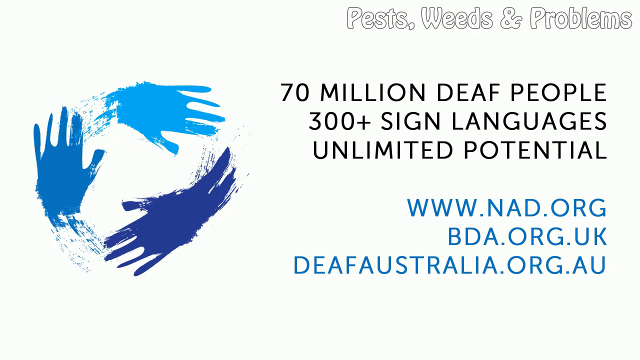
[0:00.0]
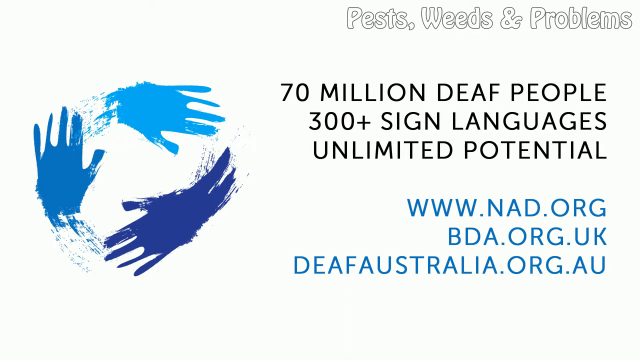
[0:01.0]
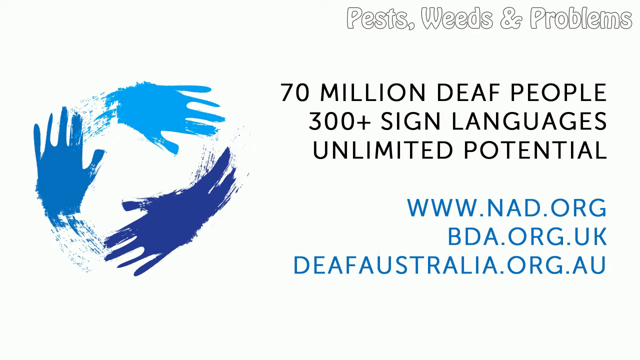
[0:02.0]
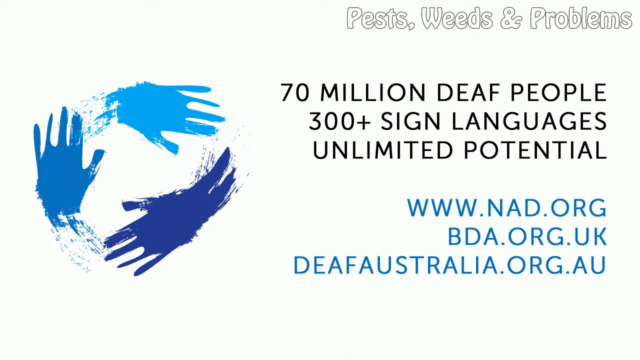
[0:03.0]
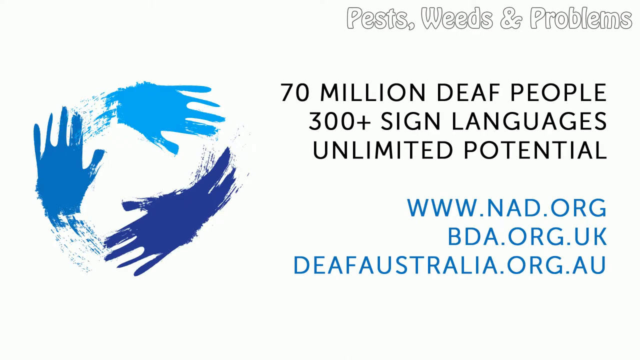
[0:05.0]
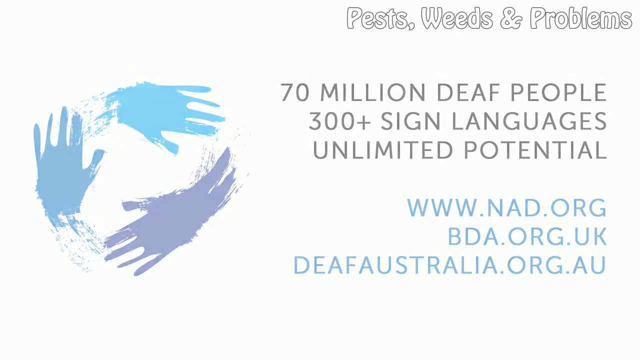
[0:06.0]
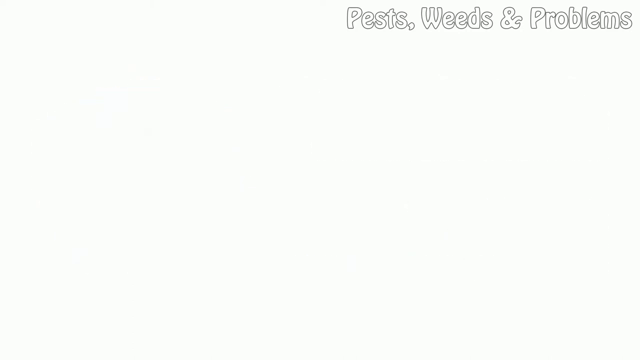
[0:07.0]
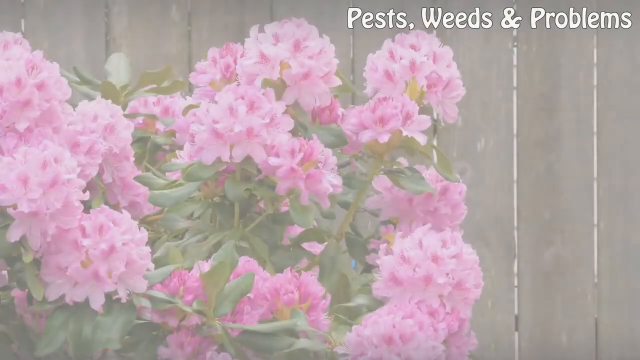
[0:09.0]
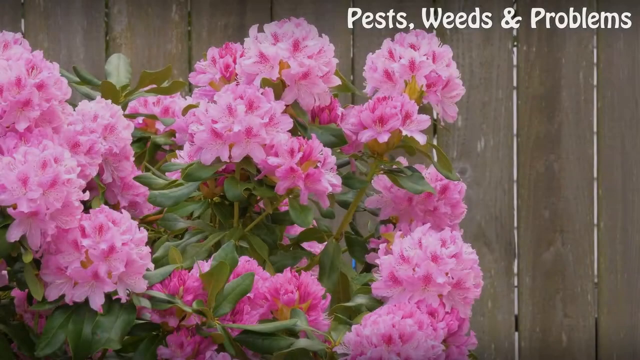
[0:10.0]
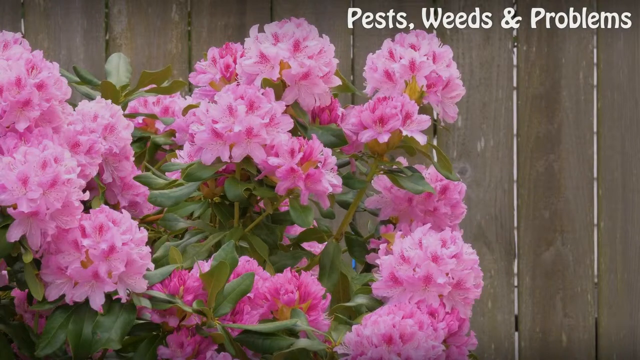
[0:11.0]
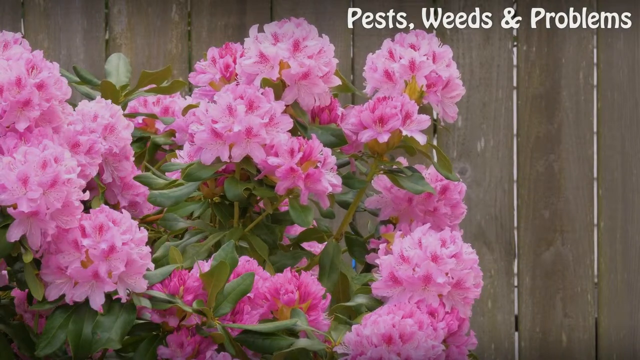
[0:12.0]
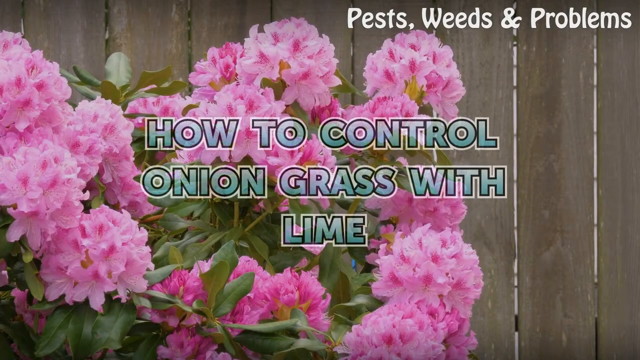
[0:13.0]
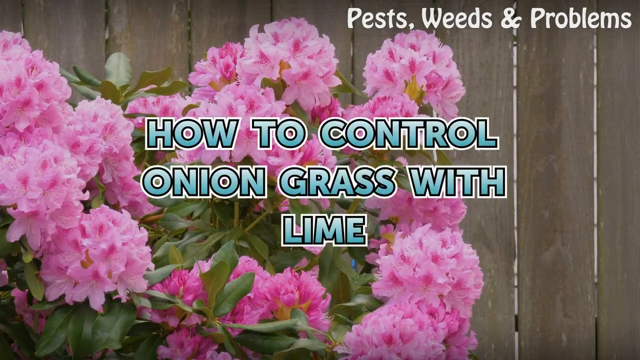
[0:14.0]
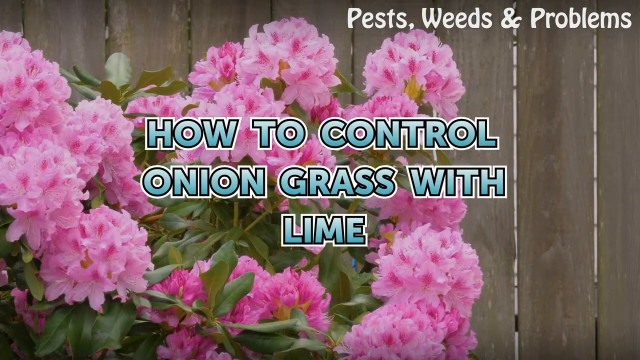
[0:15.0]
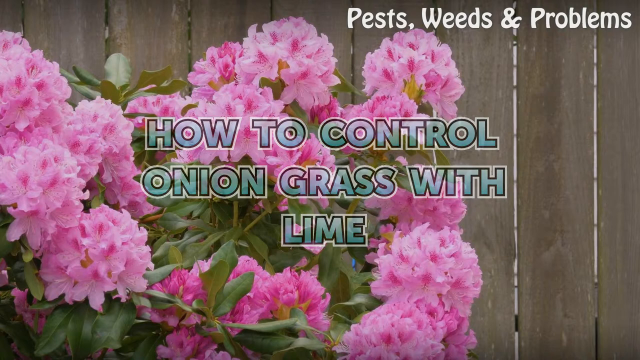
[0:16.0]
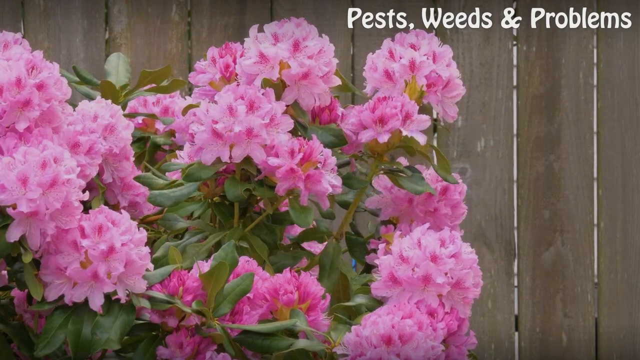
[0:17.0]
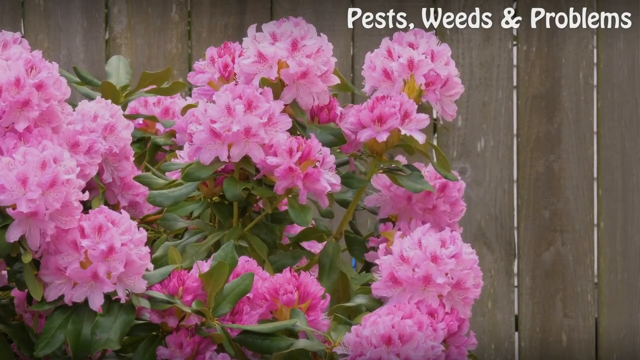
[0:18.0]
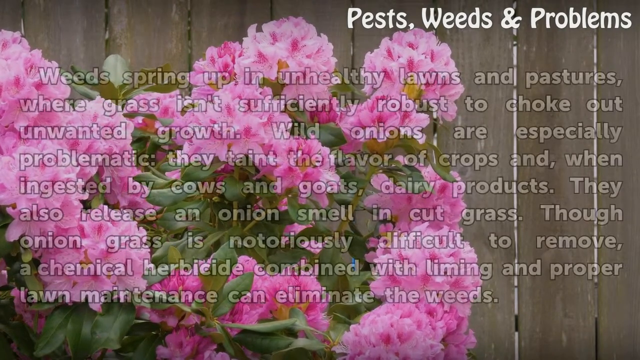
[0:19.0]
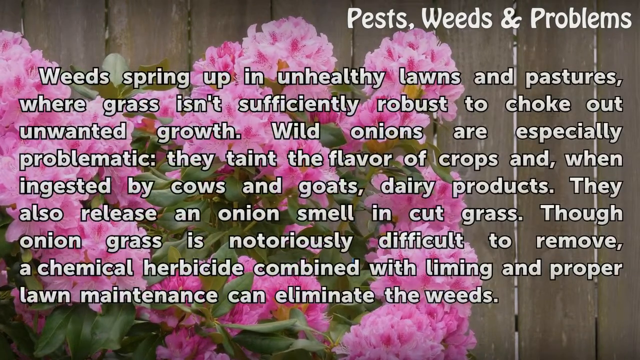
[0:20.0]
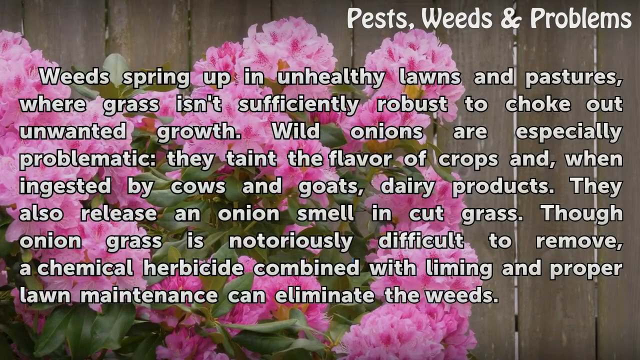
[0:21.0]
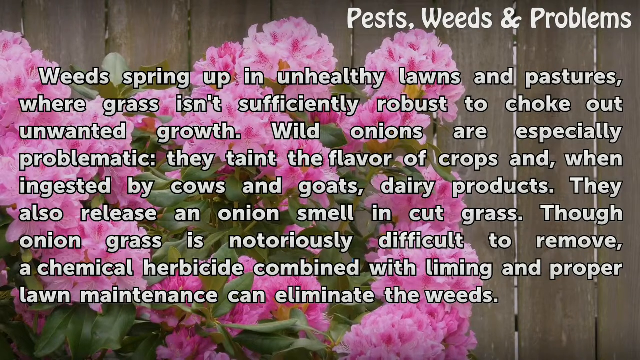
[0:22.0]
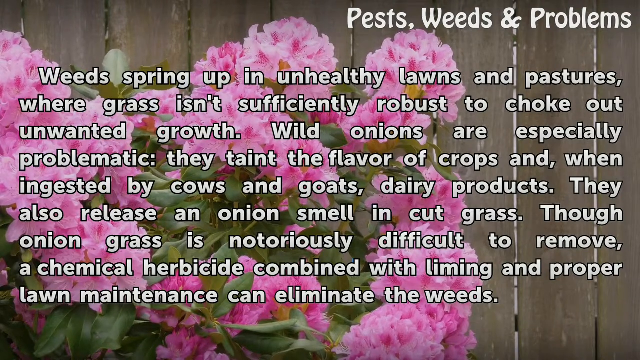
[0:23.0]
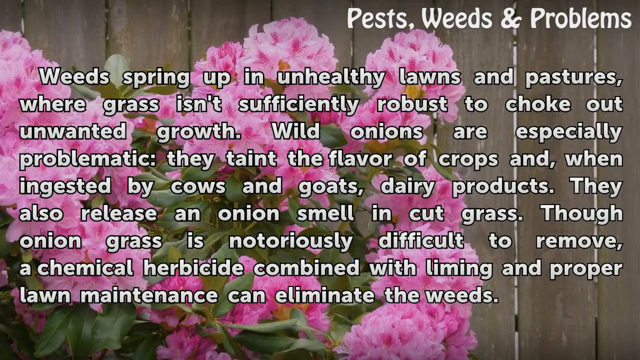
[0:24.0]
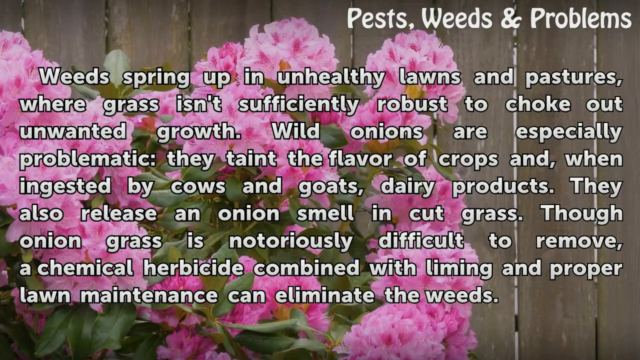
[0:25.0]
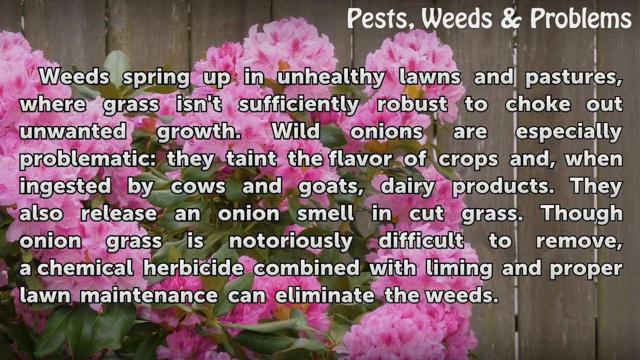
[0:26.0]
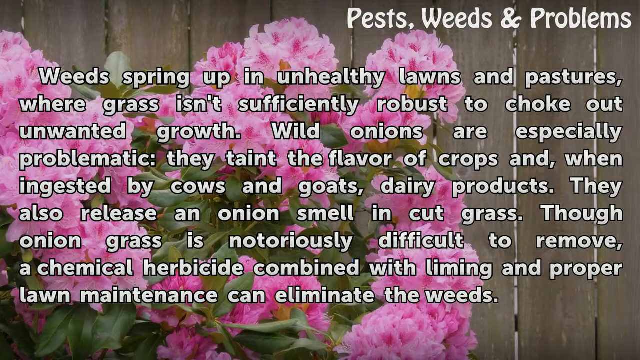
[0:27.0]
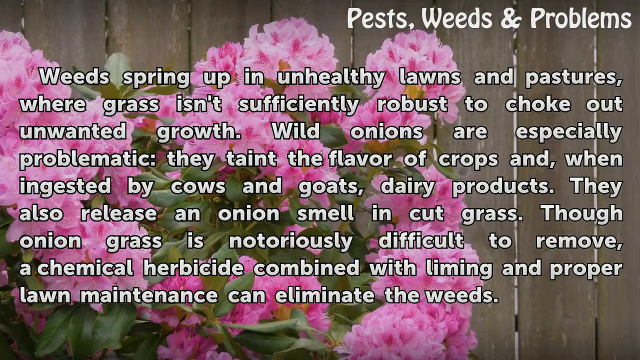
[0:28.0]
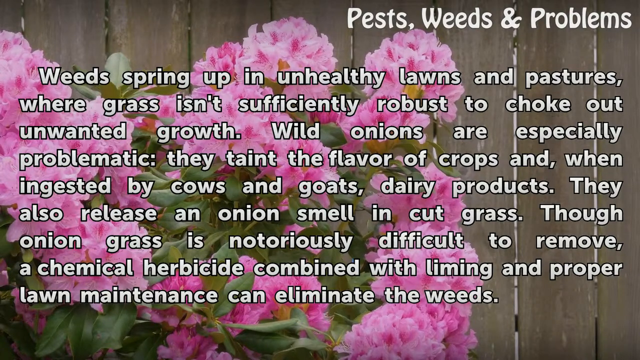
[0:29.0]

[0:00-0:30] The video opens on a white background screen. In the top right corner, bold white text reads "Pests, weeds and problems." On the left side is a logo of three hands, like three different imprints of hands in blue ink in three different tones of blue, forming a circle. To the right of this hands icon, black text reads "70 million deaf people, 300 plus sign languages, unlimited potential." Below it are three URLs in blue: "www.nav.org", "bda.org.uk", and "deafaustralia.org.au". After this introduction, the video transitions to an image of pink flowers of an unidentified kind. Text in all capitals, in a light blue gradient, slowly pops up in the middle of the screen reading "how to control onion grass with lime," then slowly vanishes. The screen then becomes covered with a lot of text, a thorough description of how to take care of or get rid of this kind of weed, covering basically the entire screen.